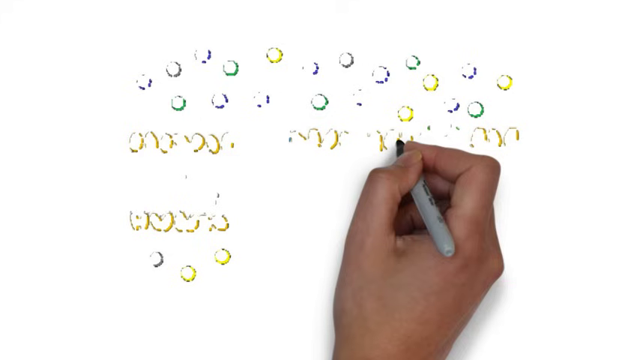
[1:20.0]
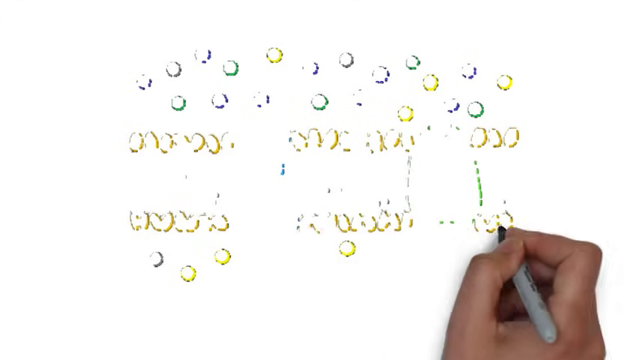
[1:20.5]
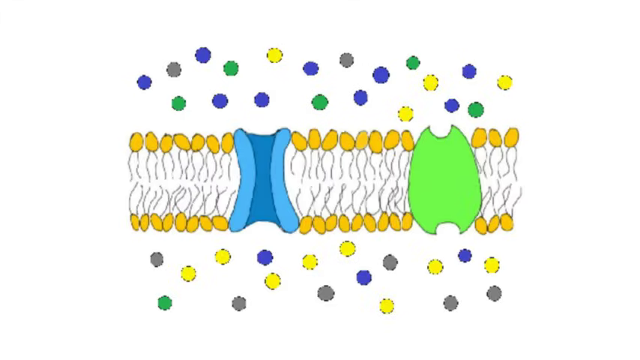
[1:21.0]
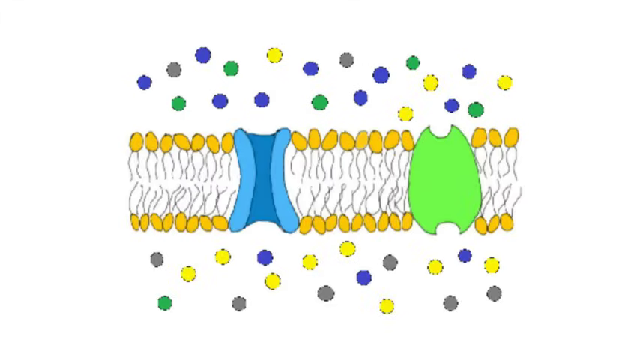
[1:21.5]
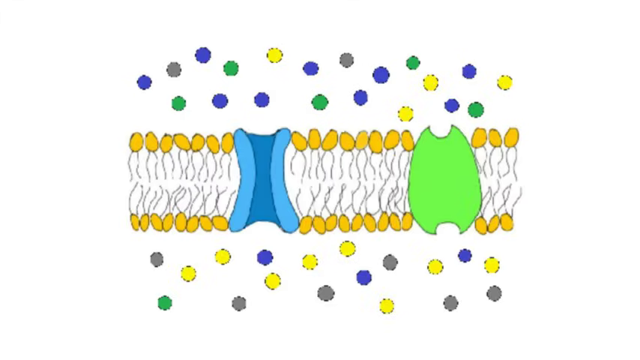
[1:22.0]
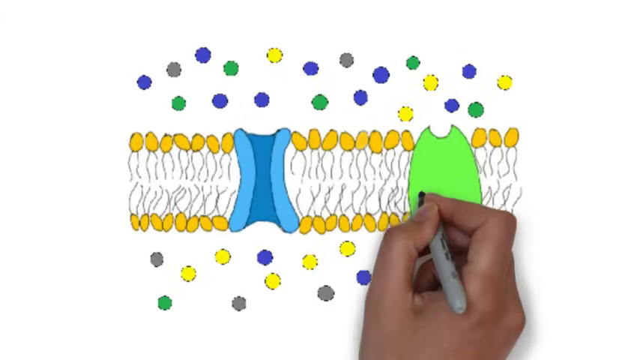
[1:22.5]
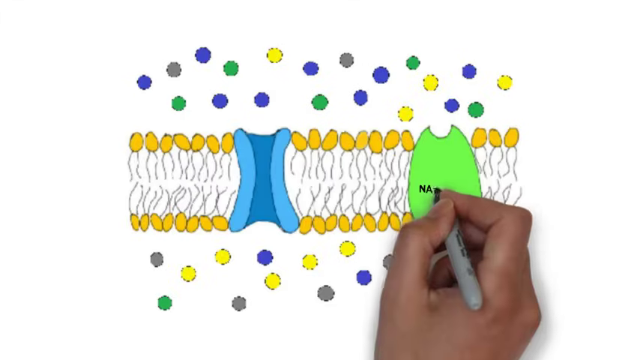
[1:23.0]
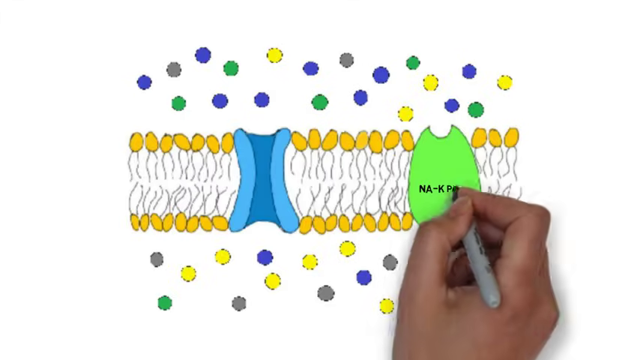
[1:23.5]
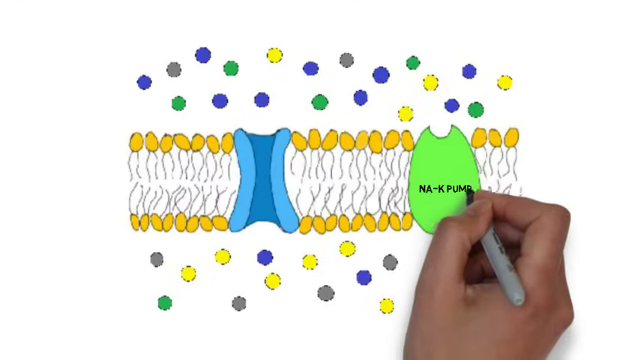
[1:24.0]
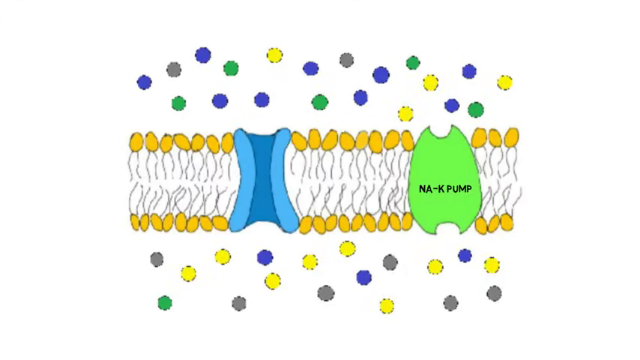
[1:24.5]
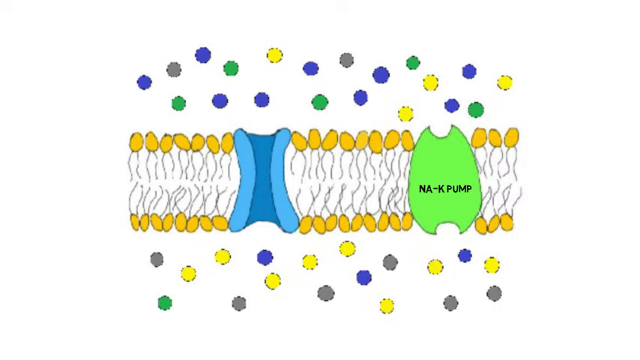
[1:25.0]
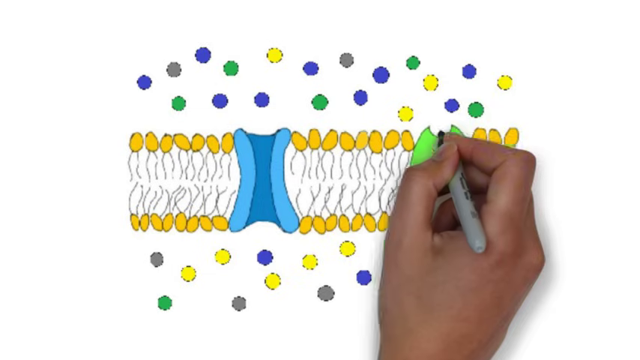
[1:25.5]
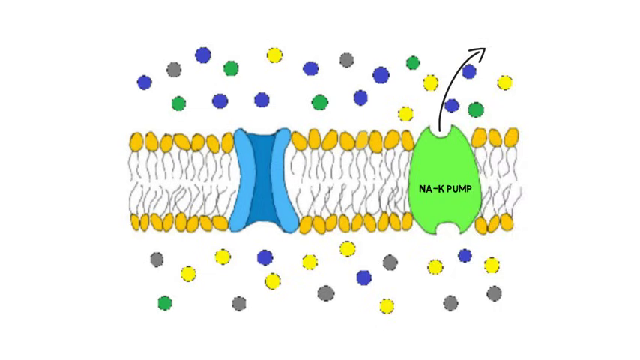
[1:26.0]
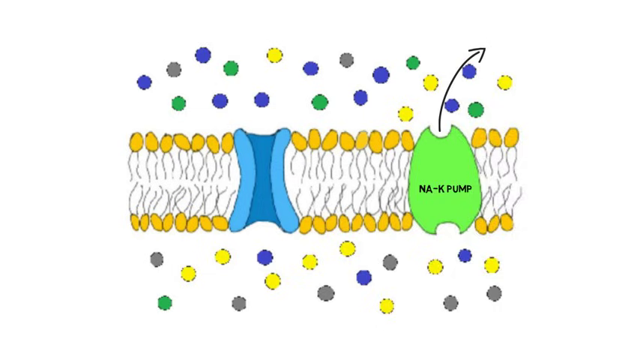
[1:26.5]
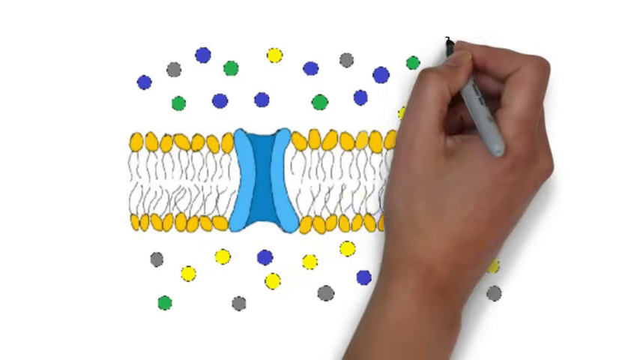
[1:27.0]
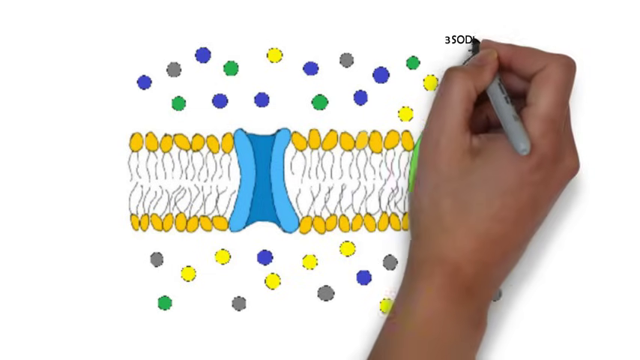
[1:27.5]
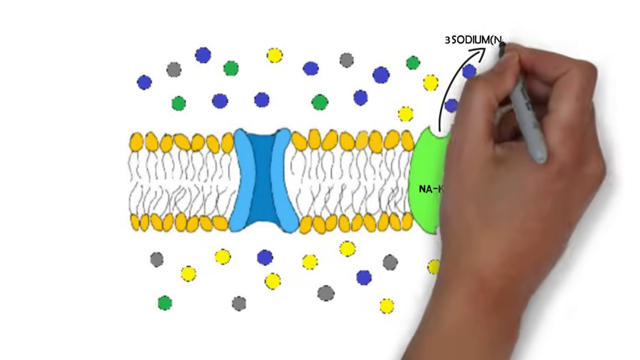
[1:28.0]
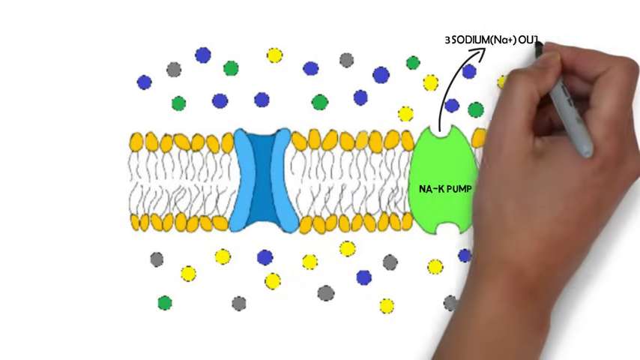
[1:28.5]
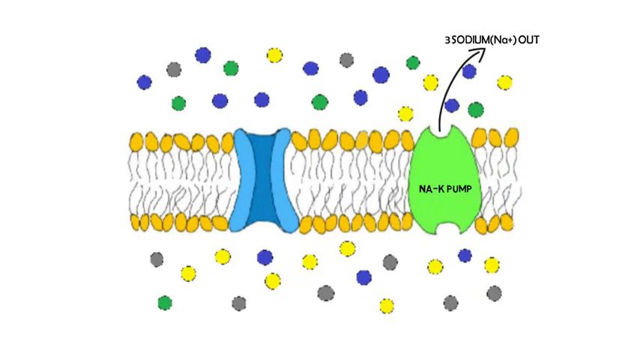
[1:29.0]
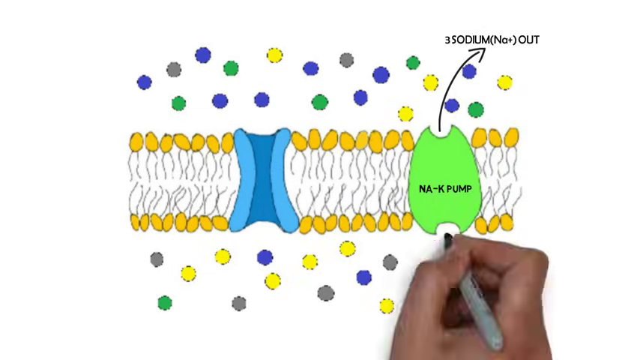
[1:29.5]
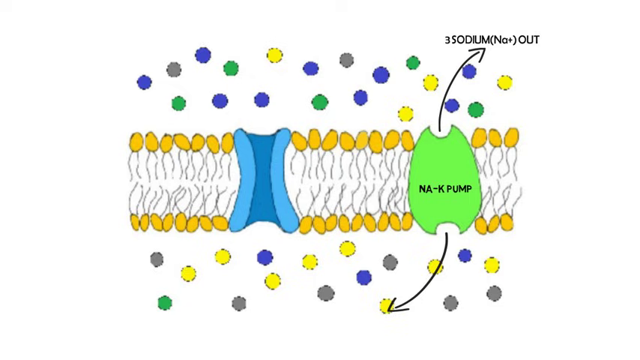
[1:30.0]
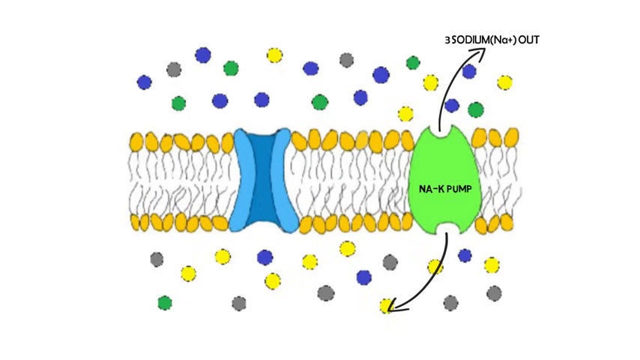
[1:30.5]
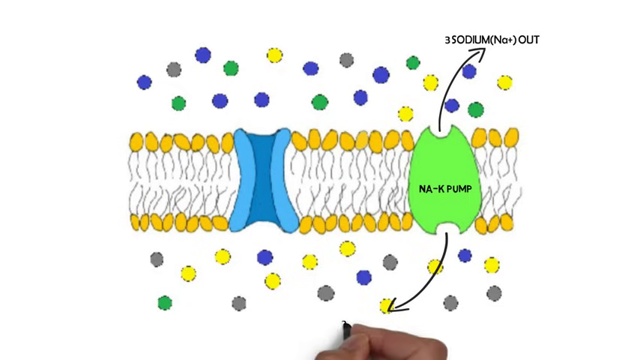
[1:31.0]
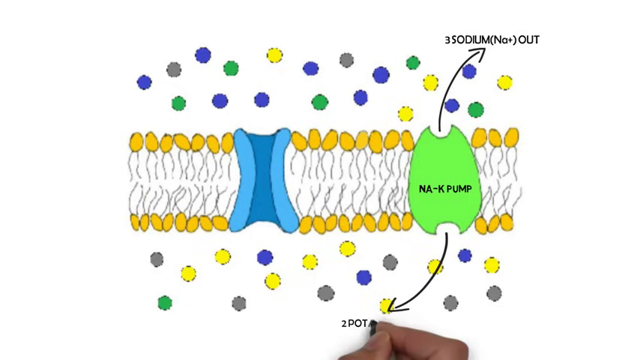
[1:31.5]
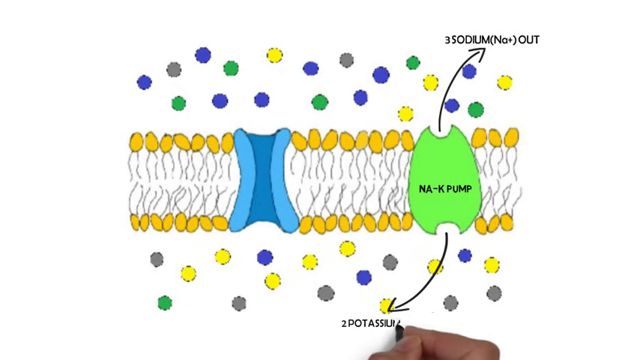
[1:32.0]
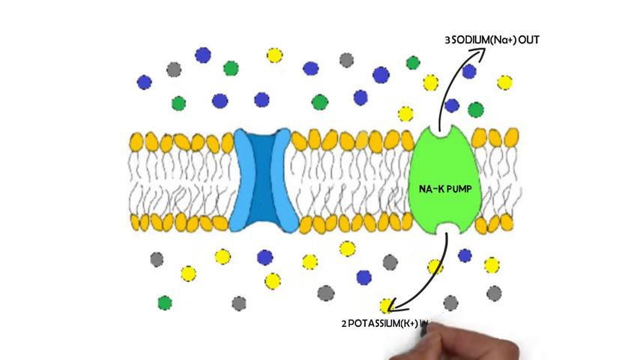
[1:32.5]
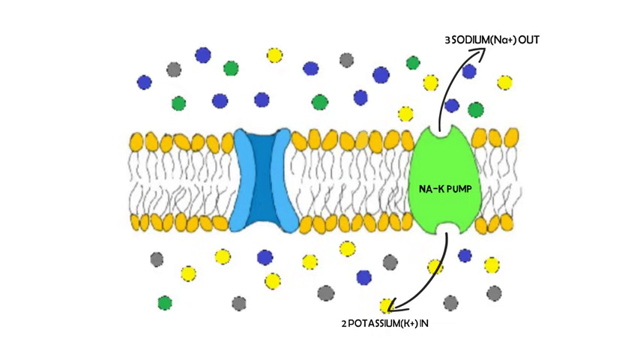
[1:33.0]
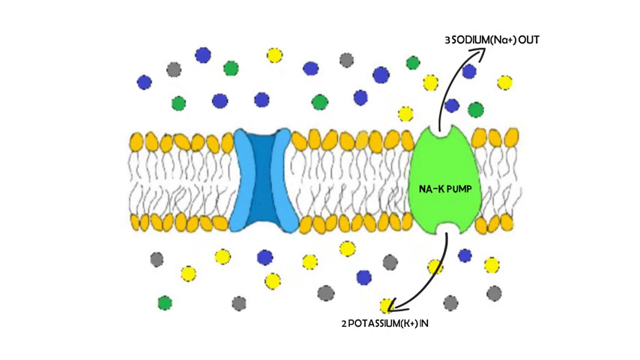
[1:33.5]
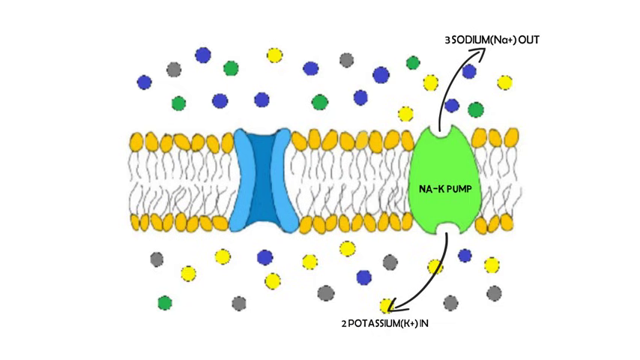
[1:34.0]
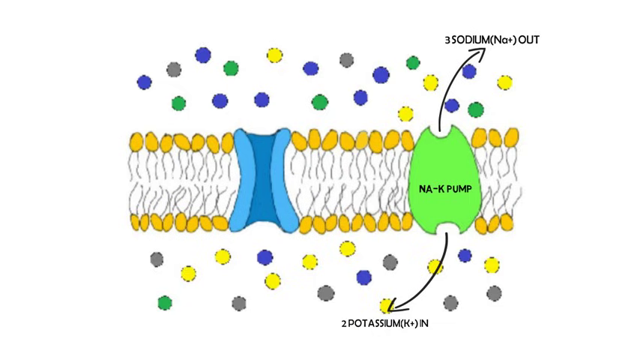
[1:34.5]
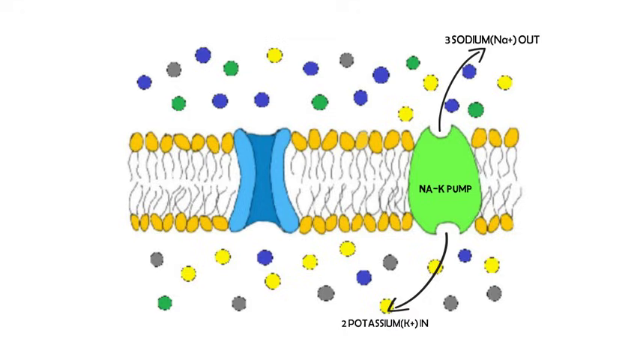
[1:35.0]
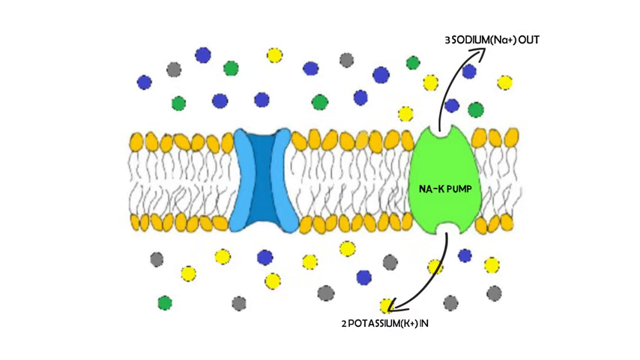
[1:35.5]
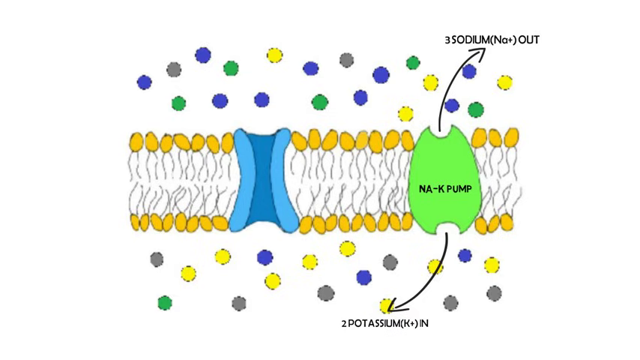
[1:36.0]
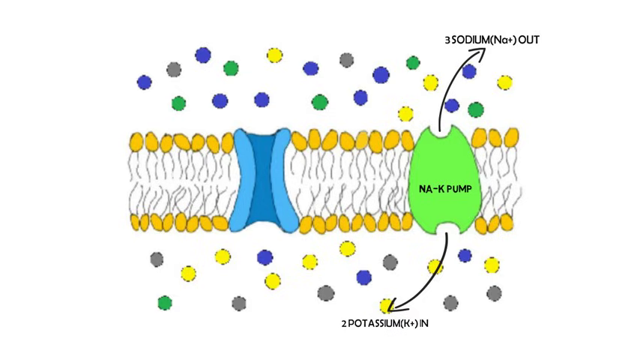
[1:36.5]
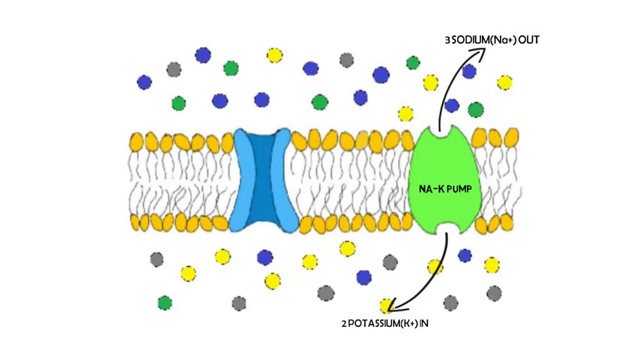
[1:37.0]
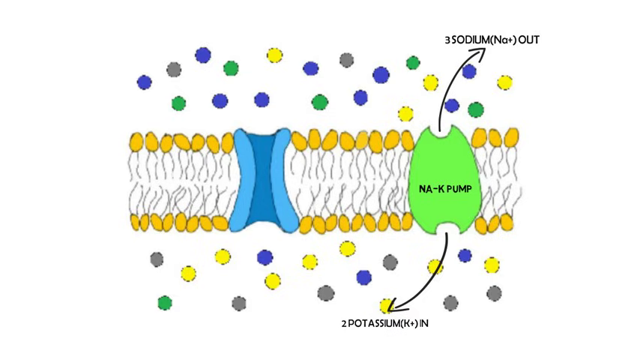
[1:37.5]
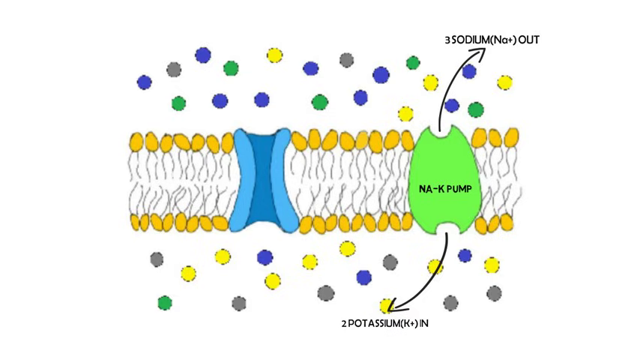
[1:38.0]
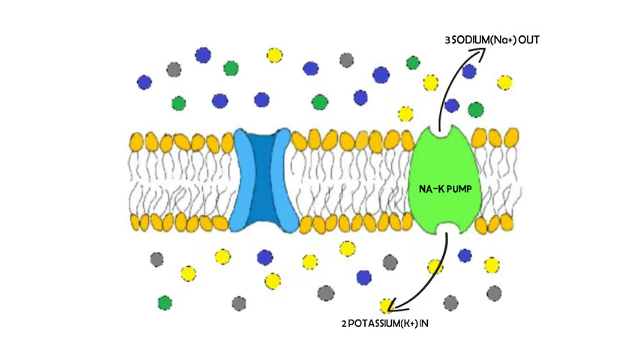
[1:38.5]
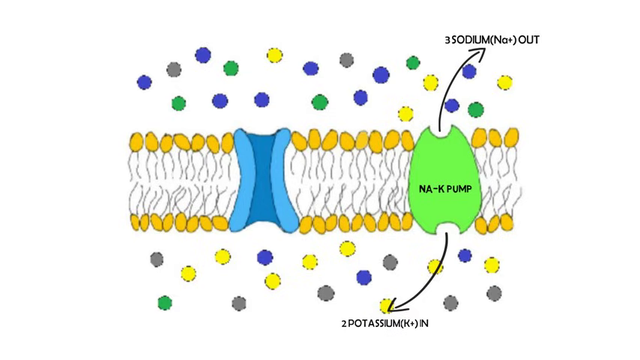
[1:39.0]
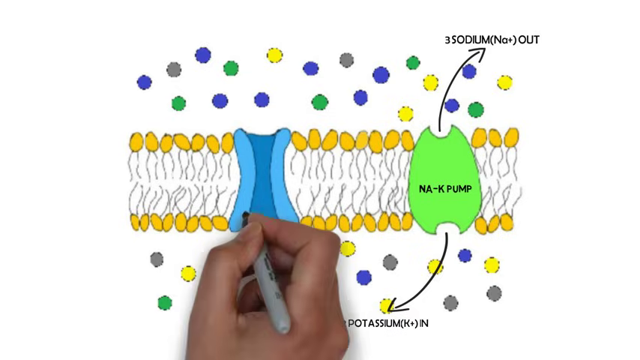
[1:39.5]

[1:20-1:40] The hand recreates the same image as before and labels the green shape as a pump, with the letters Na and K, apparently a sodium-potassium pump. It writes "sodium ions out", with an arrow drawn pointing out, and at the bottom an arrow with "potassium ions in". The sodium ions on top are positively charged, as are the potassium ions. The hand then moves to the membrane on the left, possibly another kind of pump, and starts to draw on it.